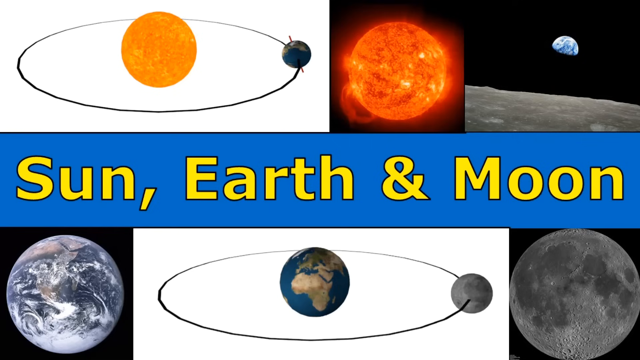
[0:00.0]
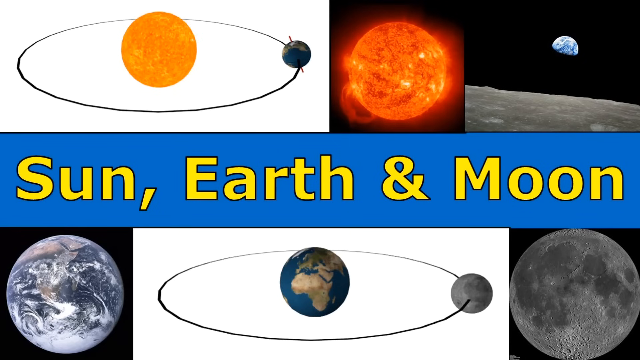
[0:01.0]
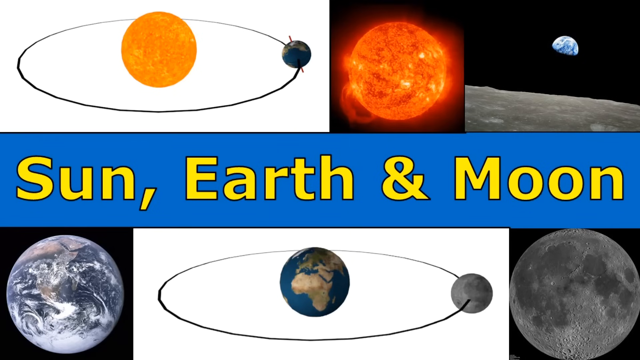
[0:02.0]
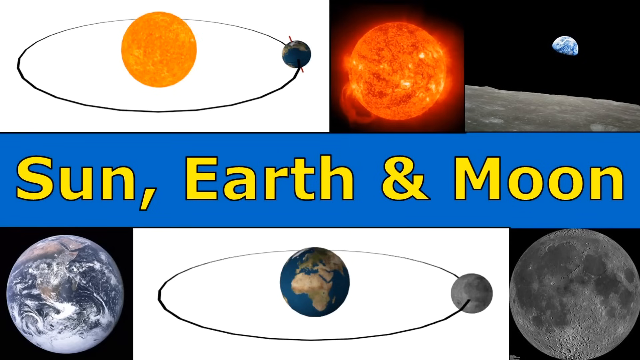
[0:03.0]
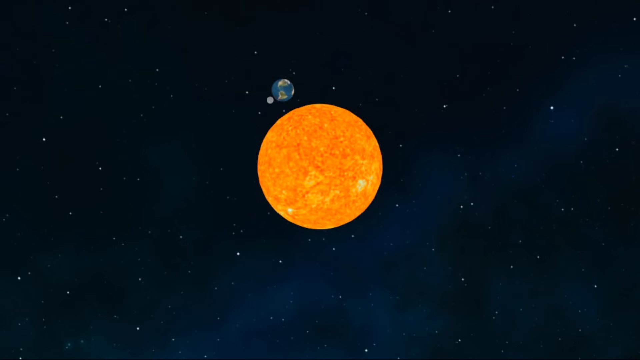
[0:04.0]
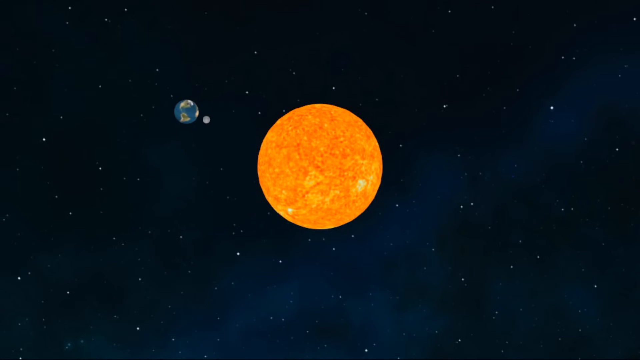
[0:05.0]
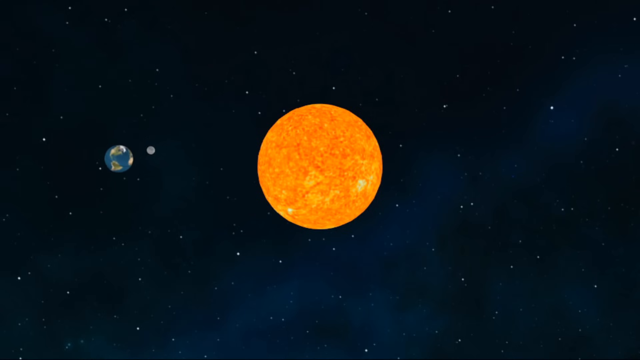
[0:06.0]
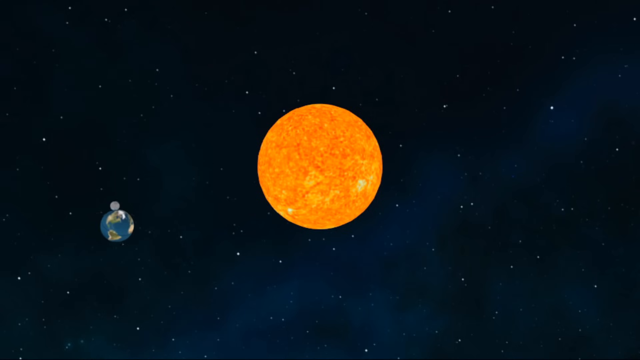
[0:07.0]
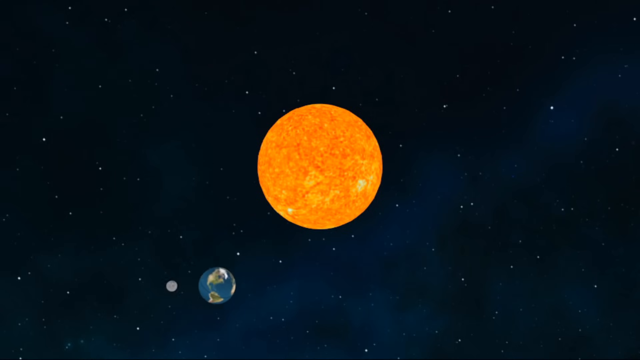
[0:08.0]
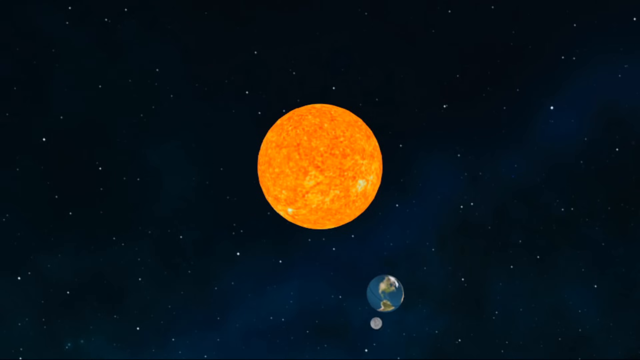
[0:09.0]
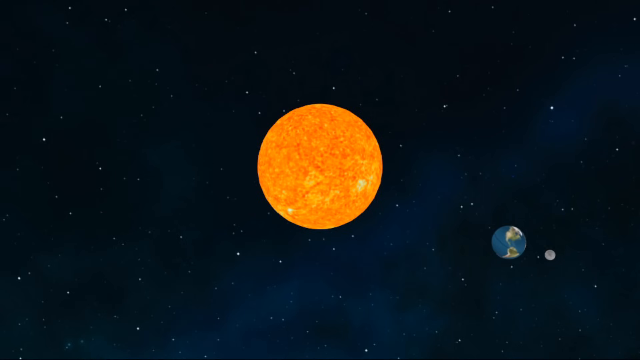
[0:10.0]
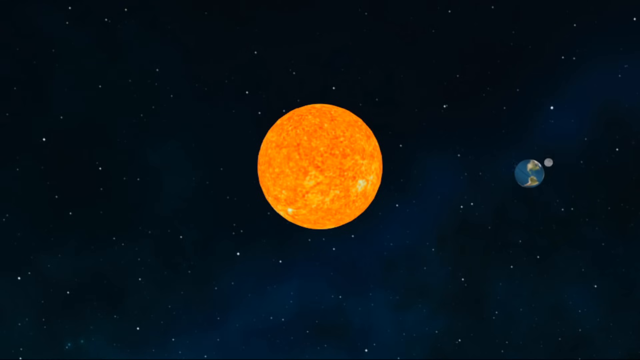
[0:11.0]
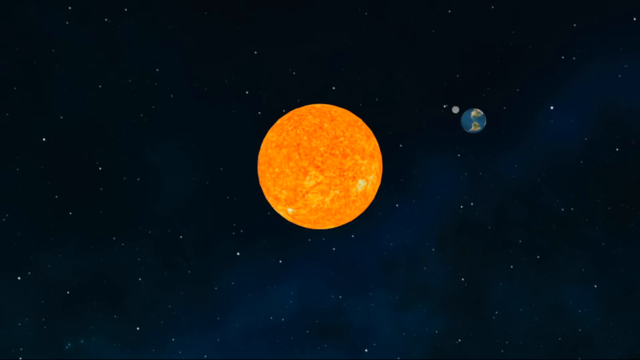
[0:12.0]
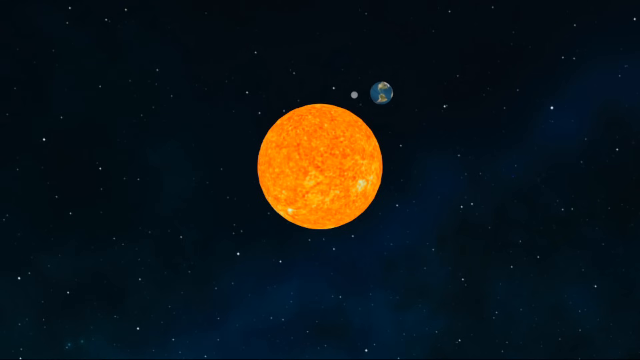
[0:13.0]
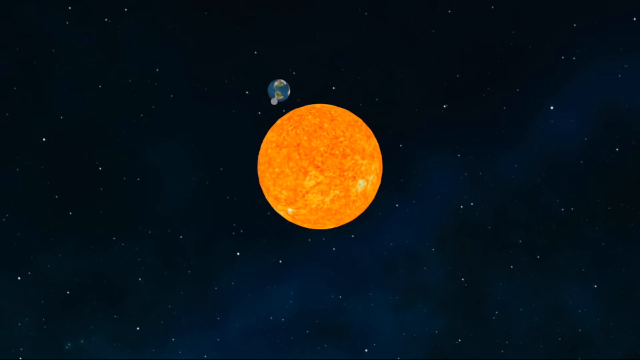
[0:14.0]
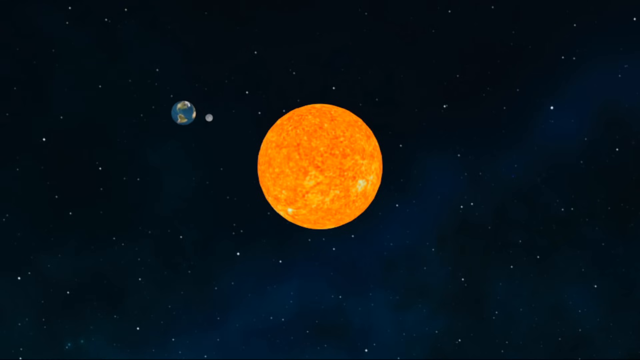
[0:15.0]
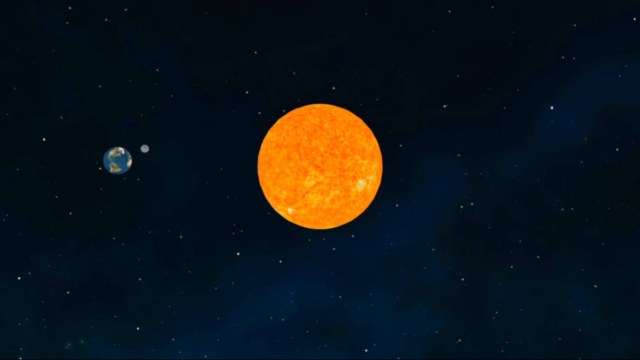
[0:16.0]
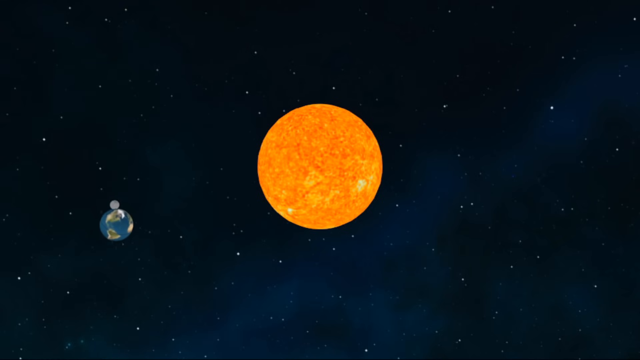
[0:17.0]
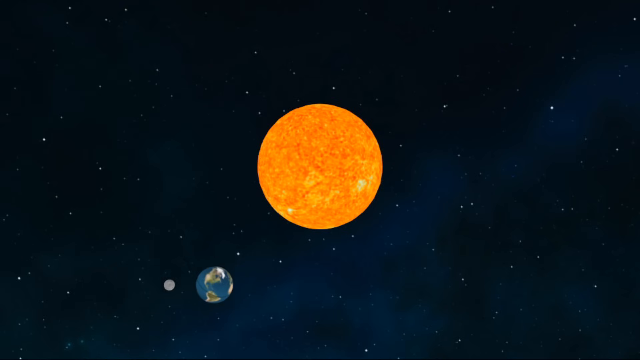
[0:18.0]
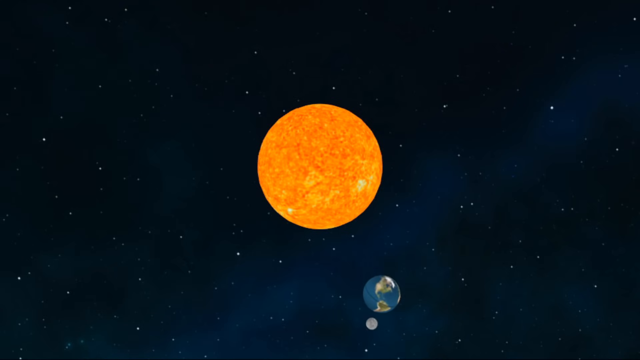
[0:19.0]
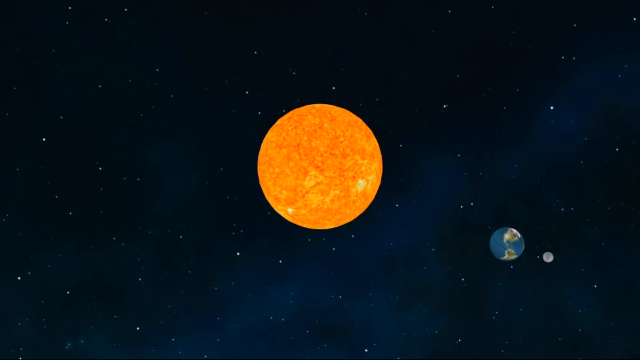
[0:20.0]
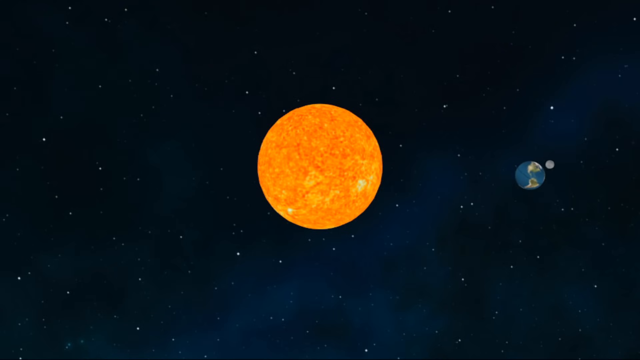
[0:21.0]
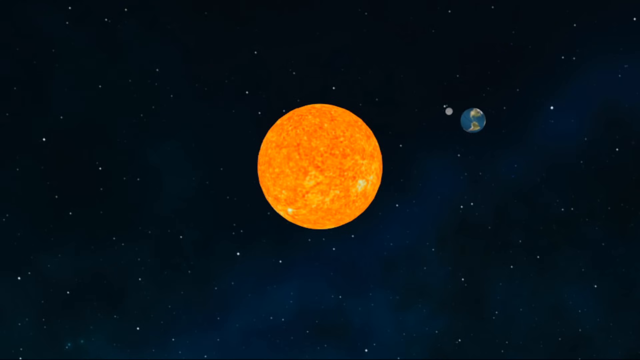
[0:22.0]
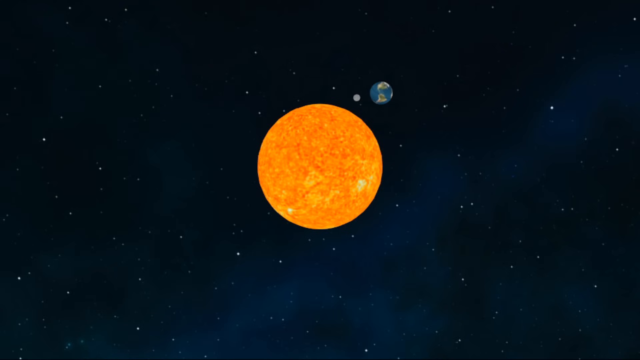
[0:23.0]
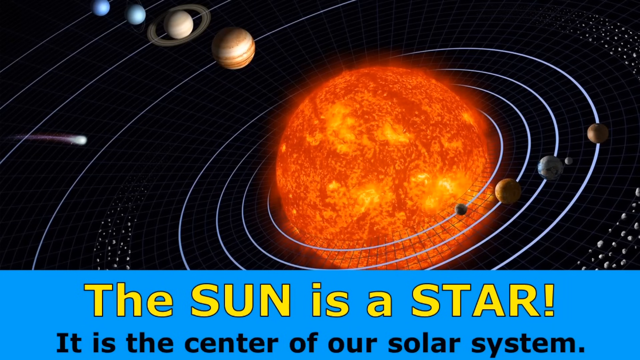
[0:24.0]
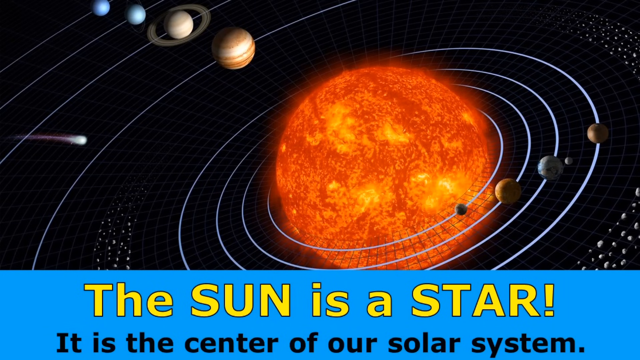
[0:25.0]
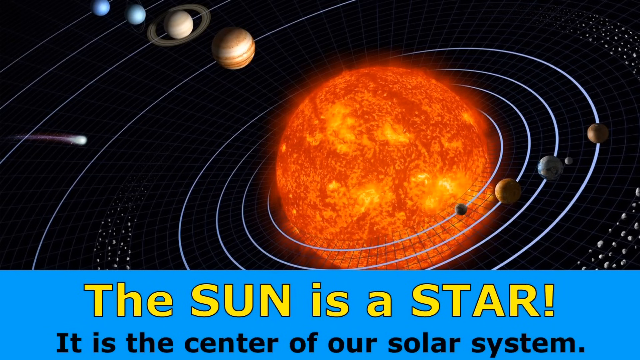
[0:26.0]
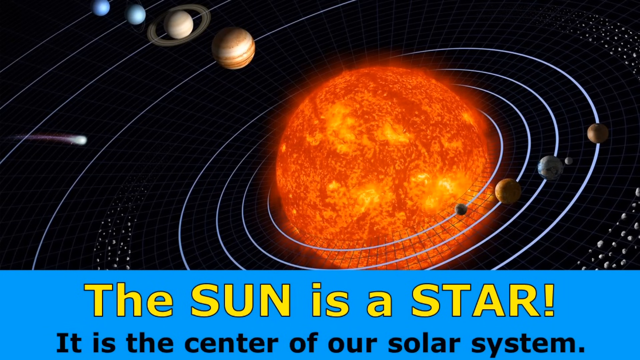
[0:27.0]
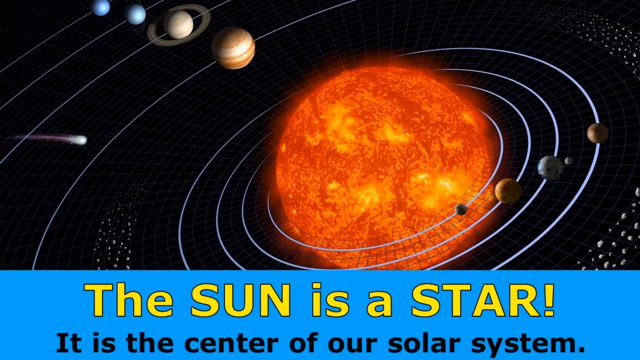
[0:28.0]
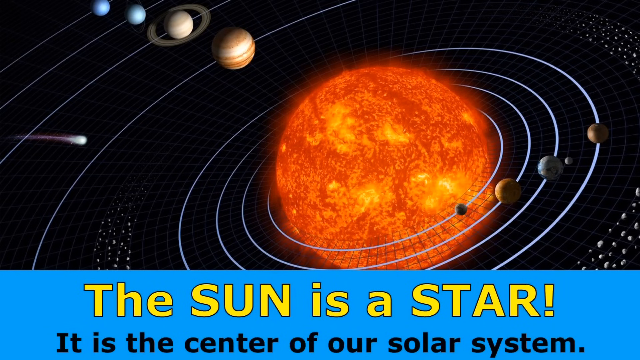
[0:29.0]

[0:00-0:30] A title screen appears first, with "sun, earth and moon" in yellow text in the middle on a sort of blue horizontal background. "Solar system" appears at the top, and the sun is shown along with a view of the earth from the moon. An animation follows in which the earth revolves around the sun while the moon goes kind of speedily around the earth. Near the end, another title card appears with "the sun is a star" at the bottom, in the same yellow text on a blue horizontal background.